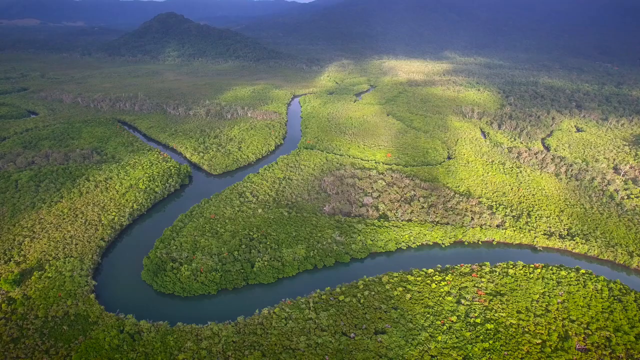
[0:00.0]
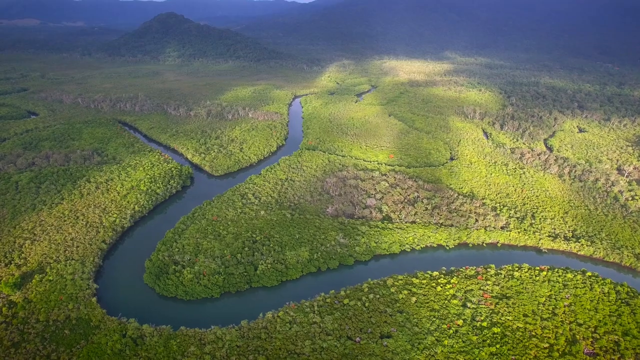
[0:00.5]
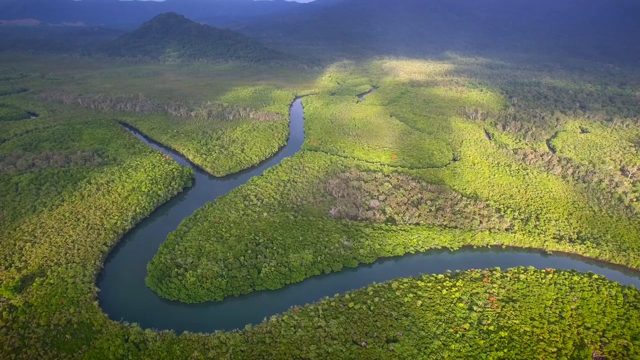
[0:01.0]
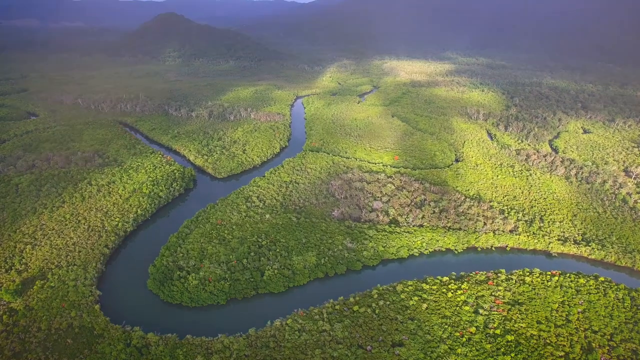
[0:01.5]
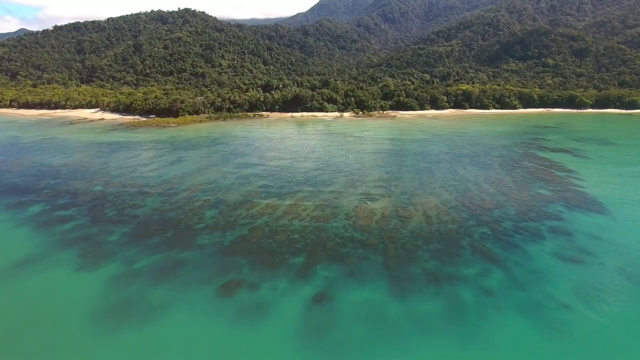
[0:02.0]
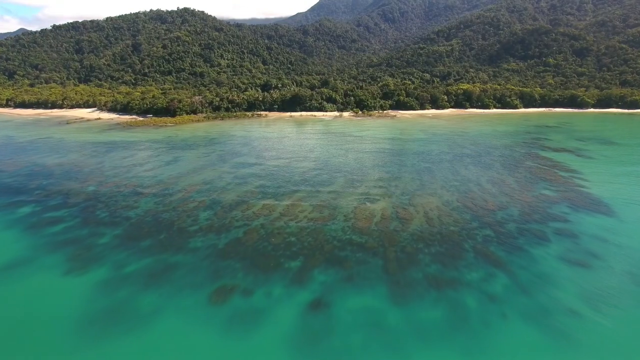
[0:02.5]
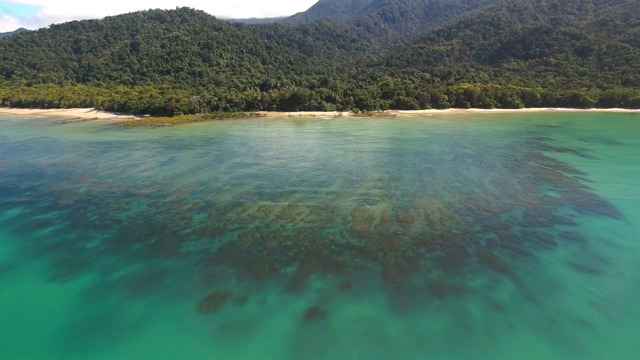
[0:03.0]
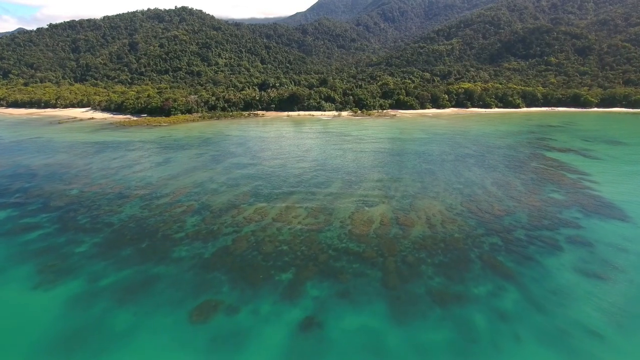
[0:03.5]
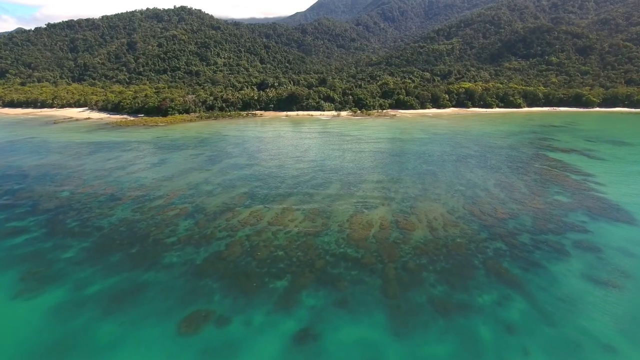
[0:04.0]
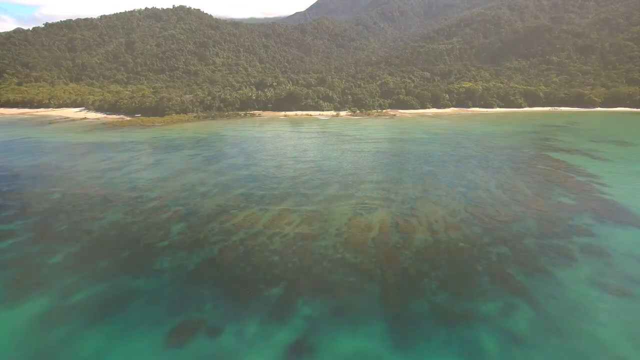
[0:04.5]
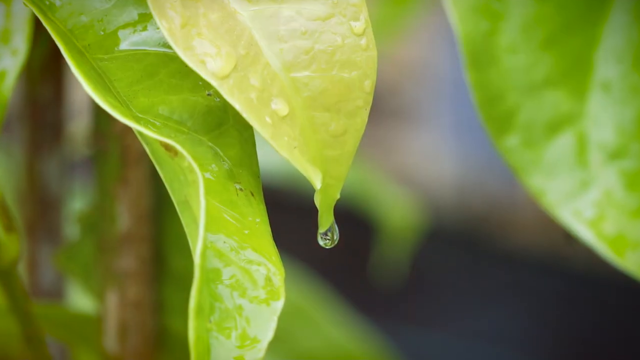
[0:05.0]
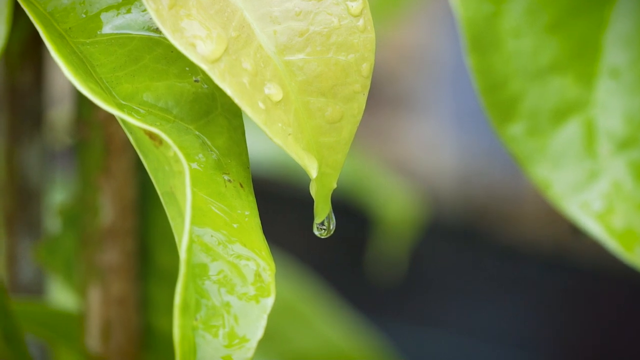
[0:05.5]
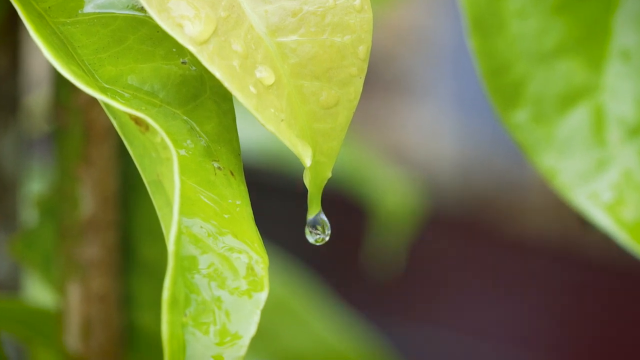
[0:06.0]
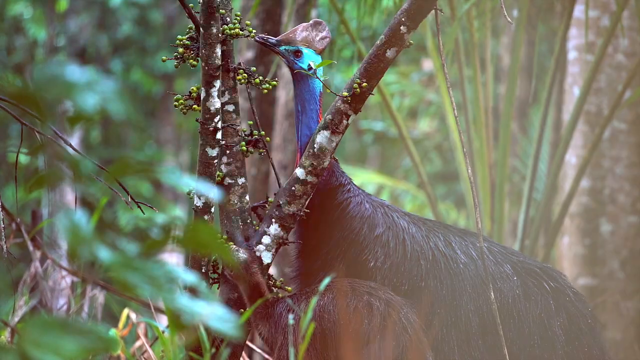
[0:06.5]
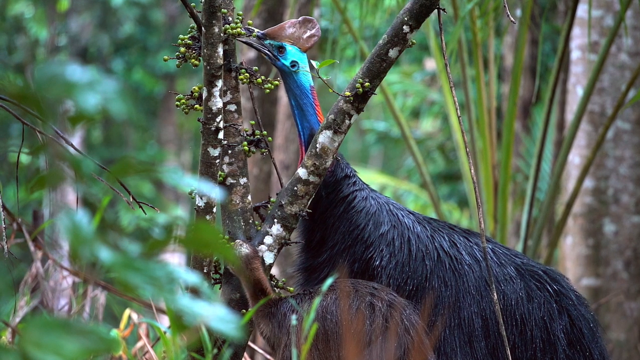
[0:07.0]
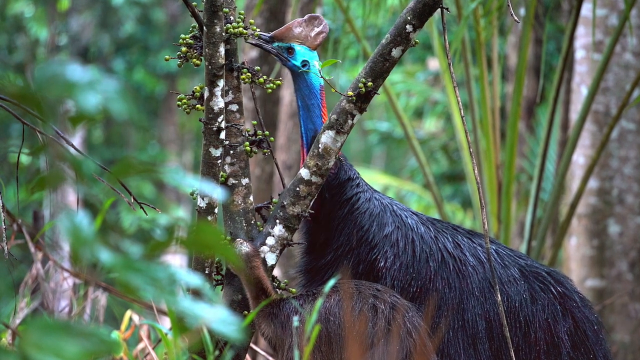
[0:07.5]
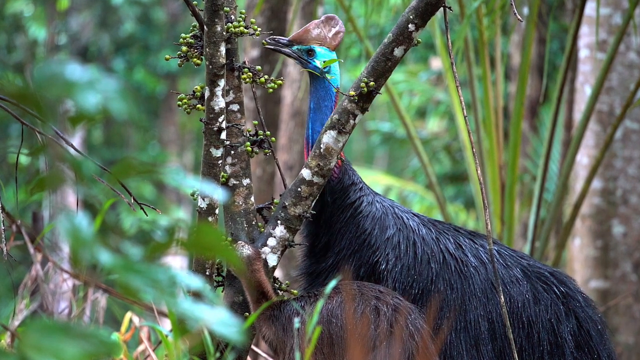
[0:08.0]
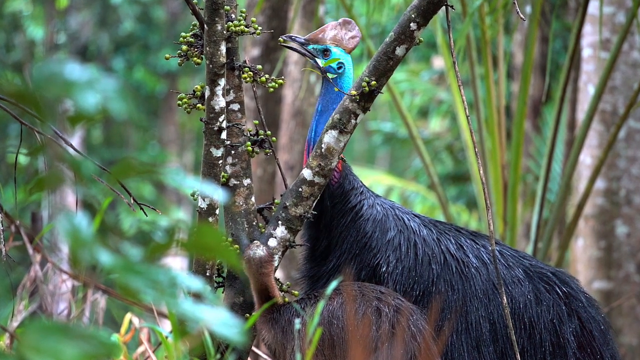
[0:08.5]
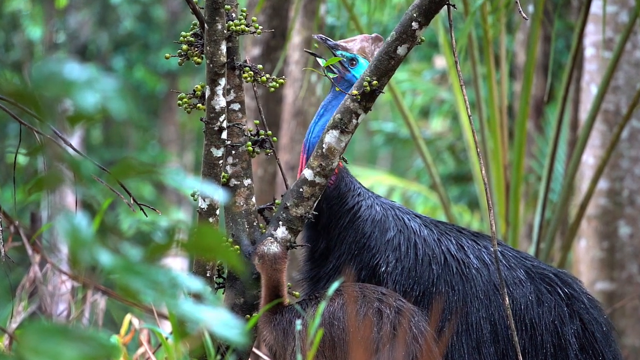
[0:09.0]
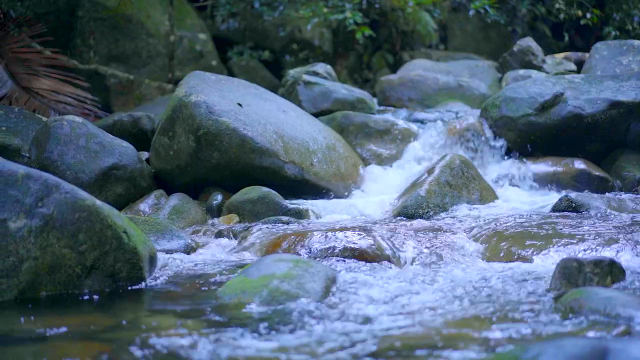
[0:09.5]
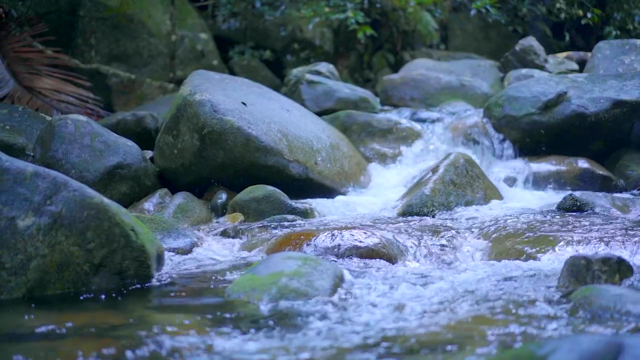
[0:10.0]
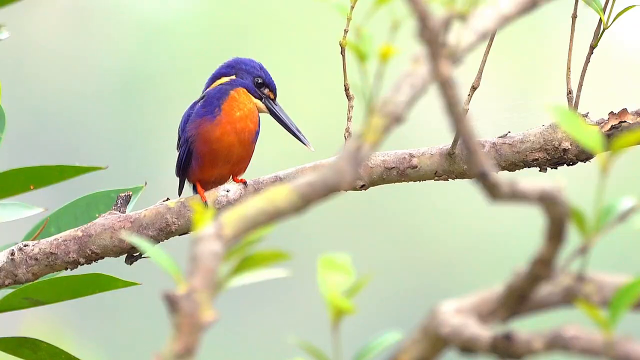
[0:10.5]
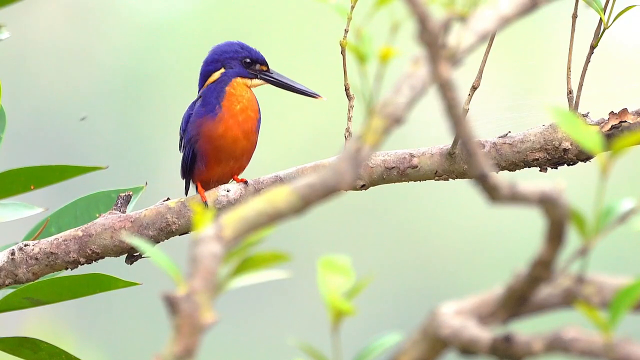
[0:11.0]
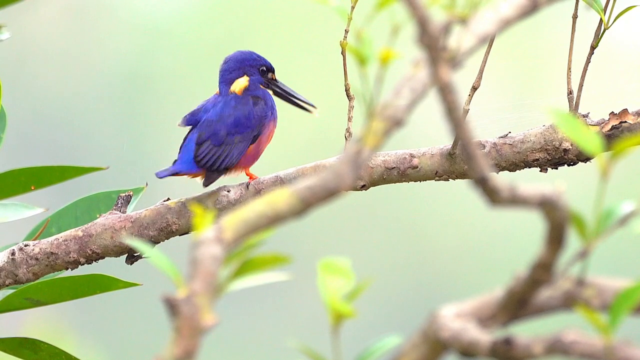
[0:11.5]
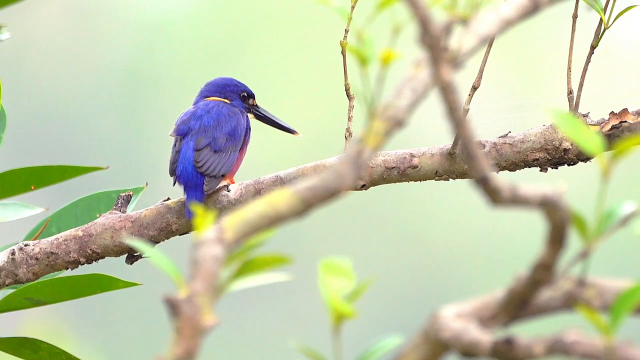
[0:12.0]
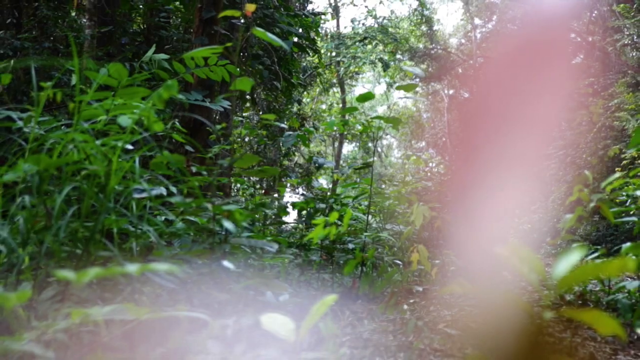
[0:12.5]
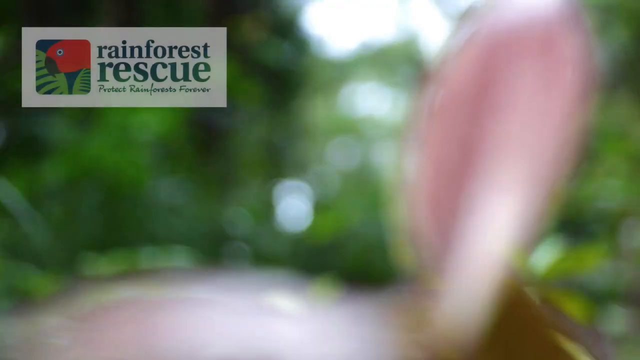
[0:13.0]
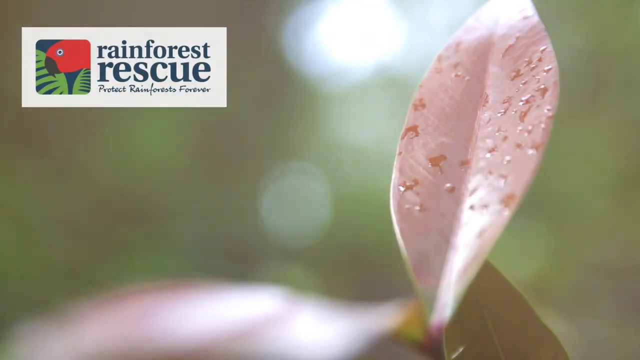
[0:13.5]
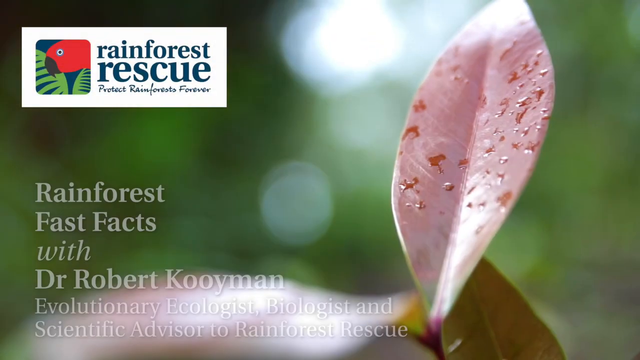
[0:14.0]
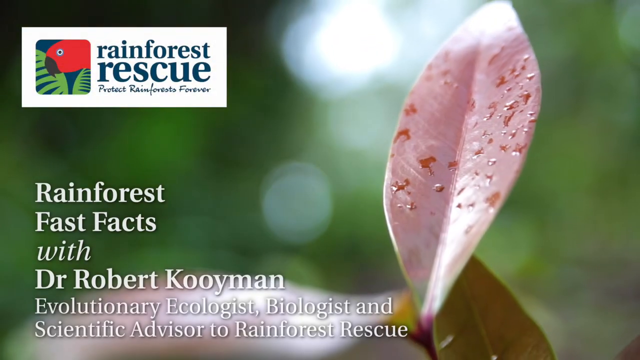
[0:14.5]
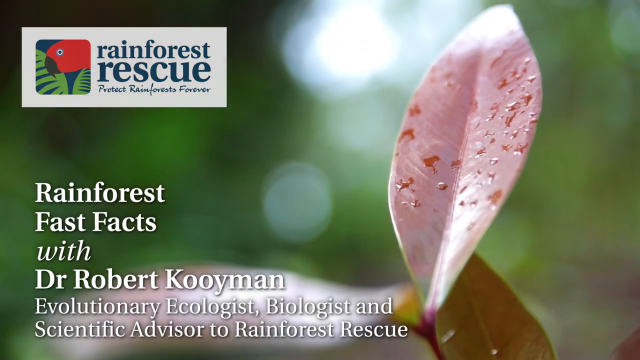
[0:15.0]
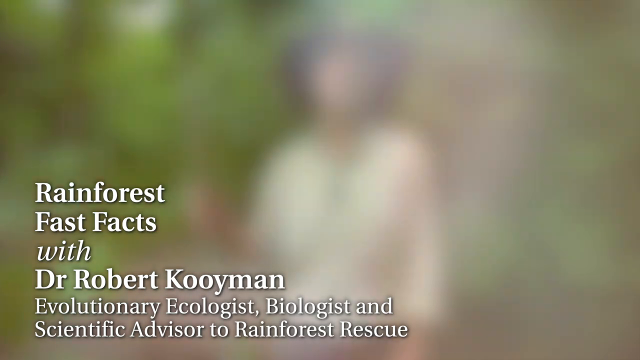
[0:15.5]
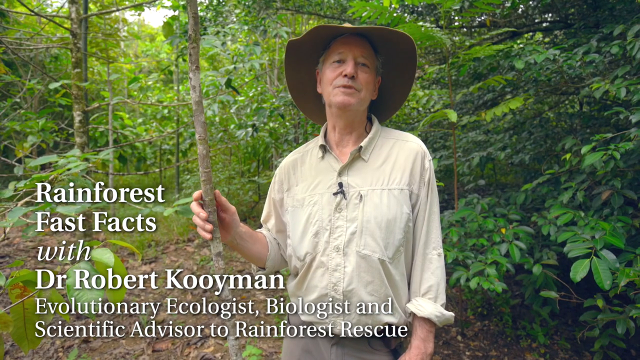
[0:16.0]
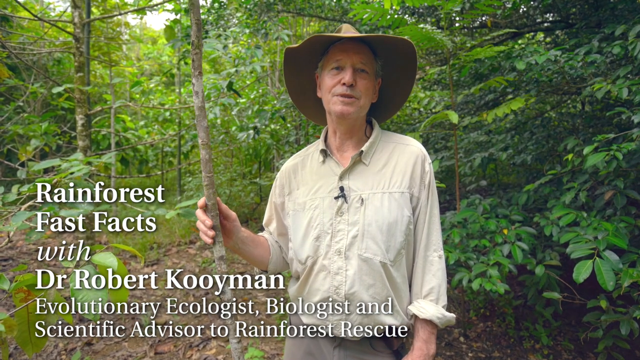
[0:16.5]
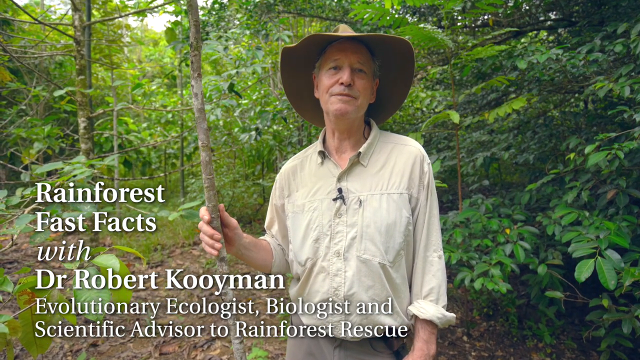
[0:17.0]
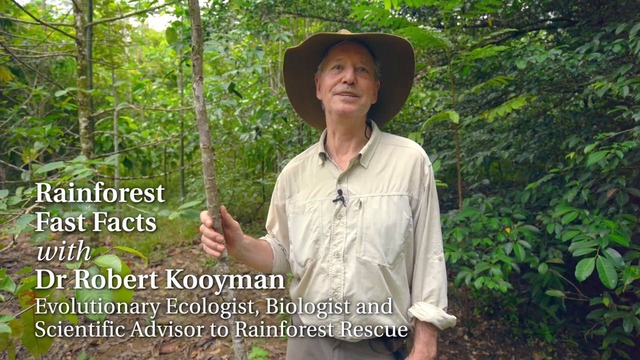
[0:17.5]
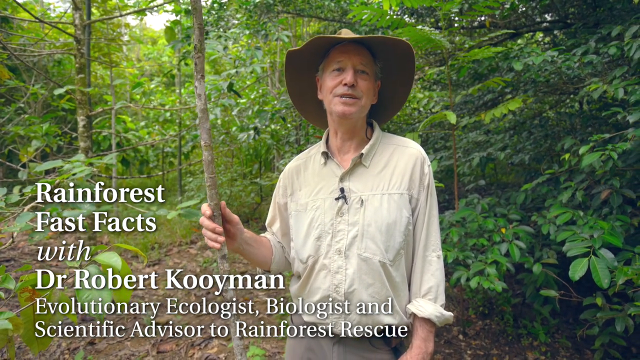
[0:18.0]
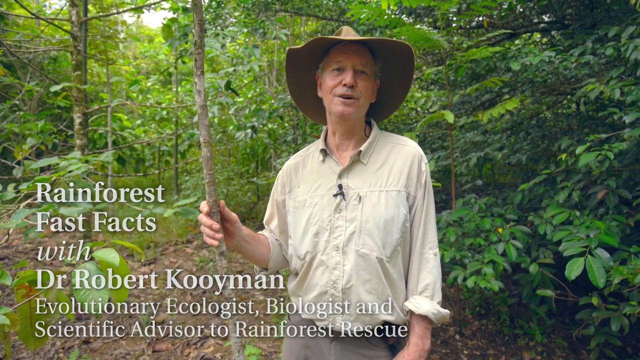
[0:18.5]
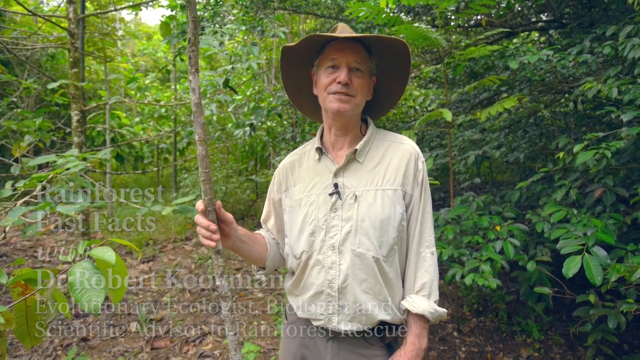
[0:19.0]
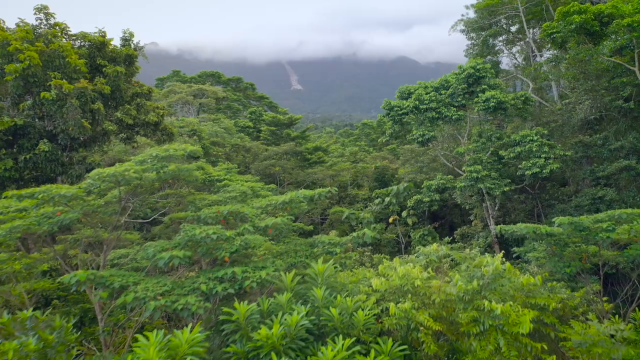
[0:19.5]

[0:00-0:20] The video opens with an aerial view above a small, winding stream or river with jungle all around it. It cuts to see-through blue water and a sandy beach, with large tree-covered mountains behind the beach. Next comes a large black bird with a blue neck and a turquoise face eating berries off a bush, followed by a small purple bird with an orange stomach sitting on a stick. The screen then changes to a green background showing a pink leaf. To the left of the leaf, in the top left corner of the screen, text reads "Rainforest Rescue, Protect Rainforest Forever." Beside it is a small square containing a picture of a red bird, and underneath, text reads "Rainforest Fast Facts with Dr. Robert Cooeyman, Evolutionary Ecologist, Biologist, and Scientific Advisor to Rainforest Rescue."